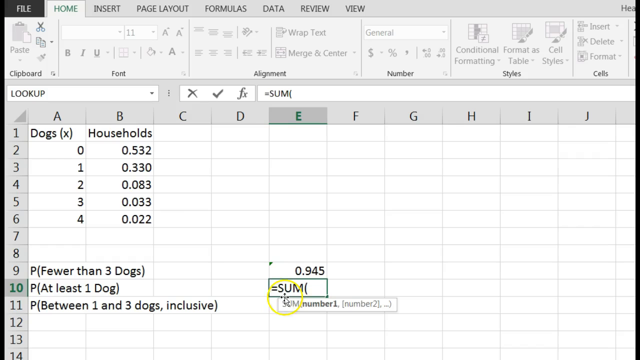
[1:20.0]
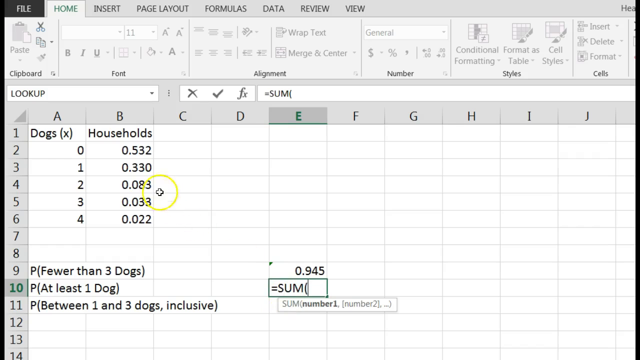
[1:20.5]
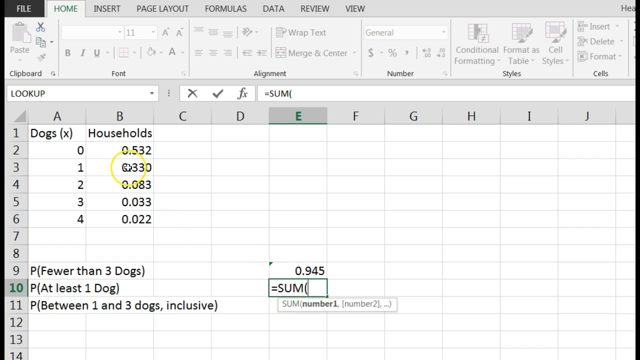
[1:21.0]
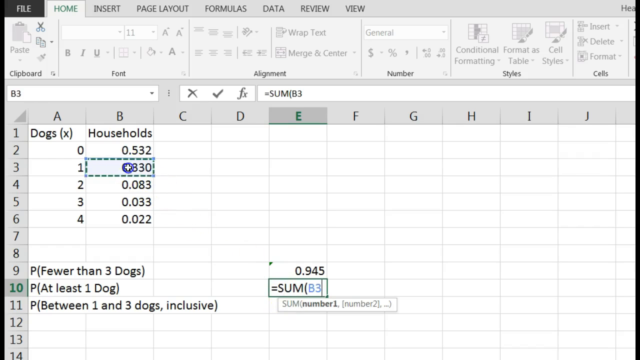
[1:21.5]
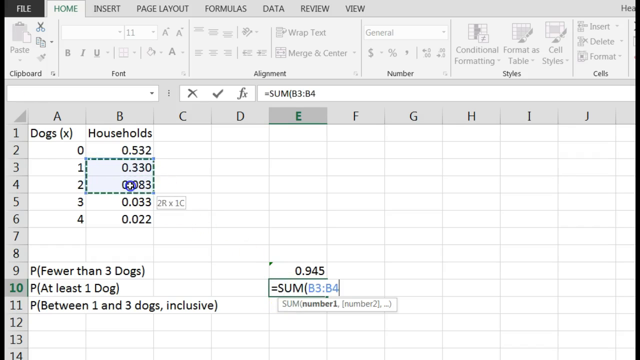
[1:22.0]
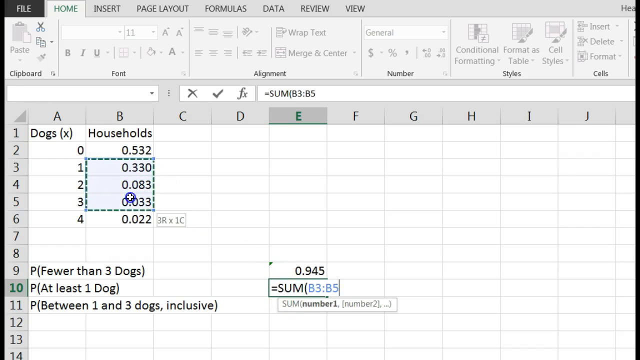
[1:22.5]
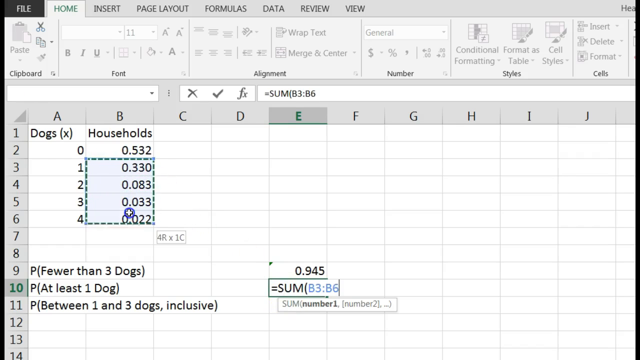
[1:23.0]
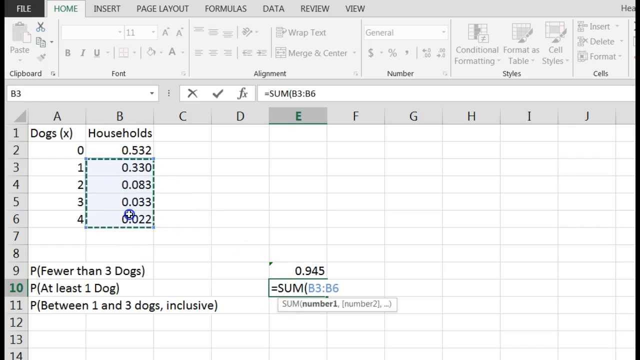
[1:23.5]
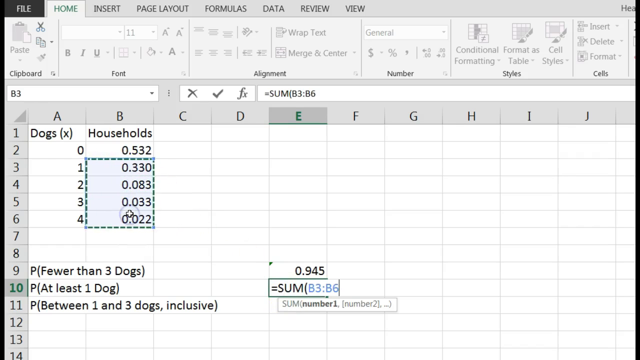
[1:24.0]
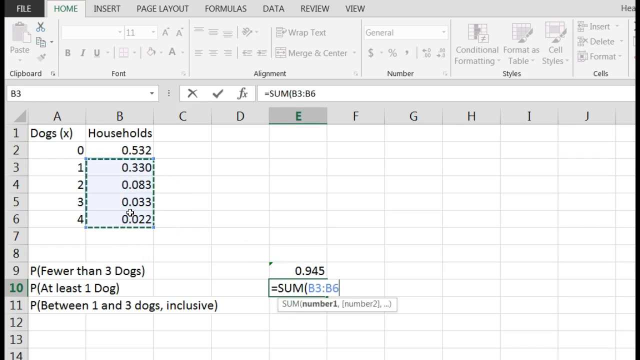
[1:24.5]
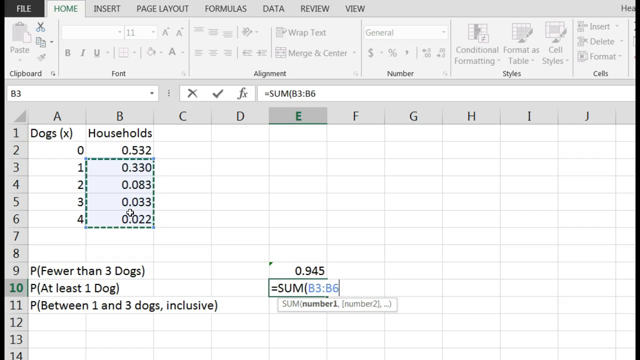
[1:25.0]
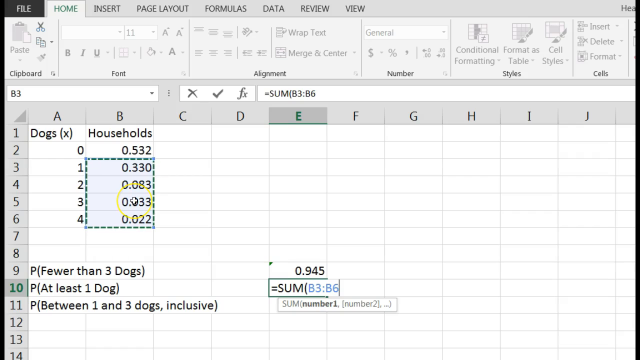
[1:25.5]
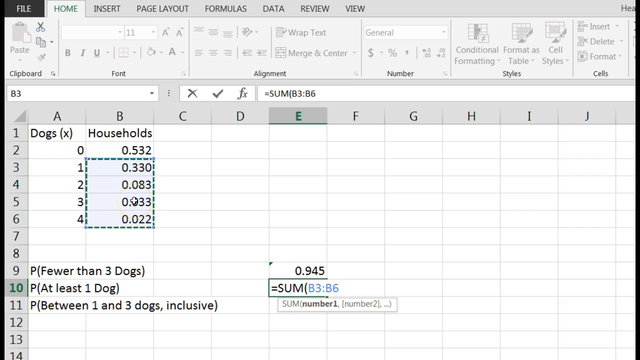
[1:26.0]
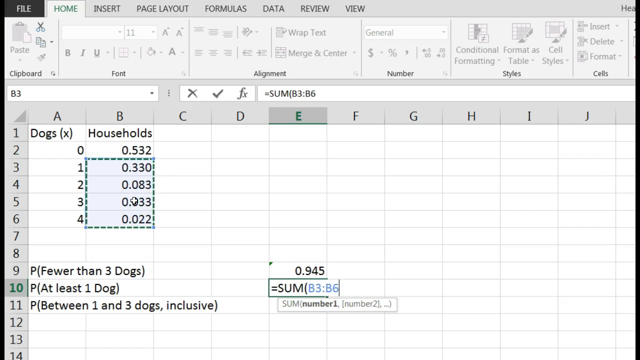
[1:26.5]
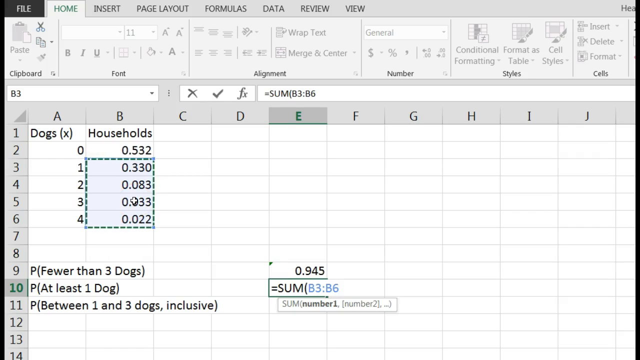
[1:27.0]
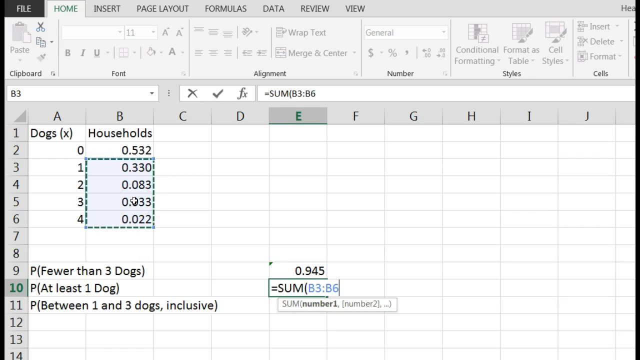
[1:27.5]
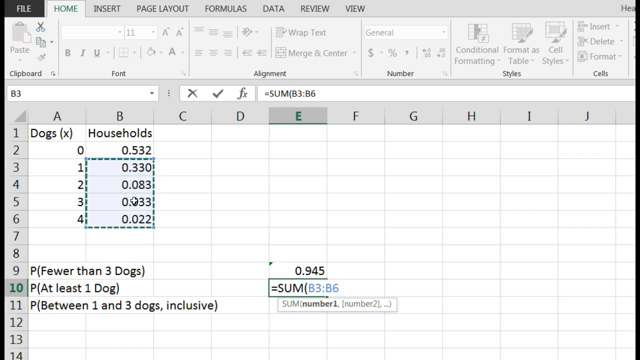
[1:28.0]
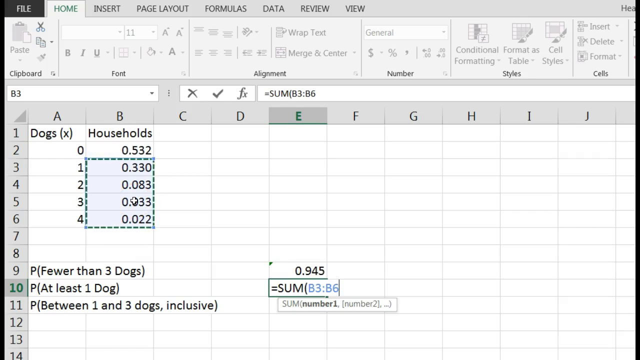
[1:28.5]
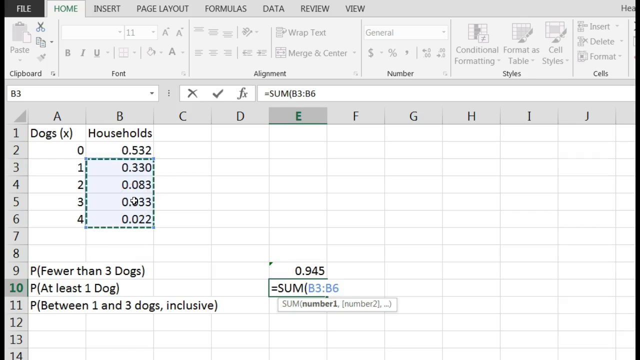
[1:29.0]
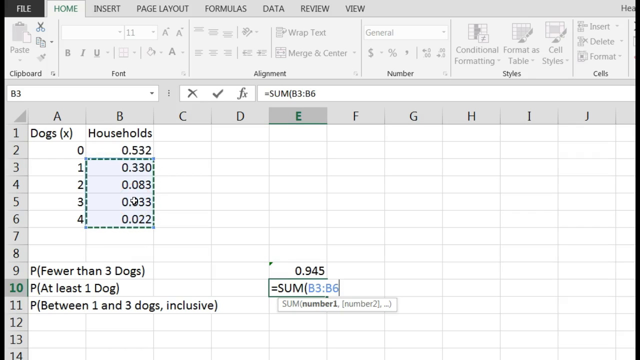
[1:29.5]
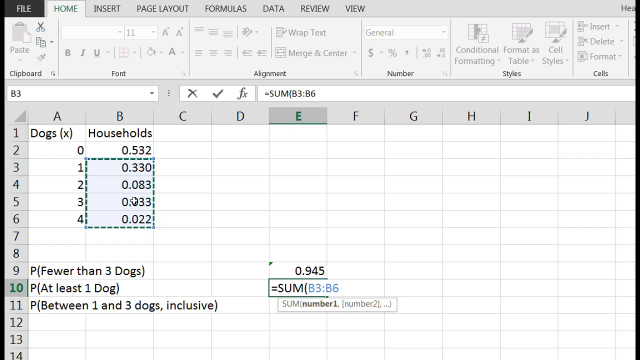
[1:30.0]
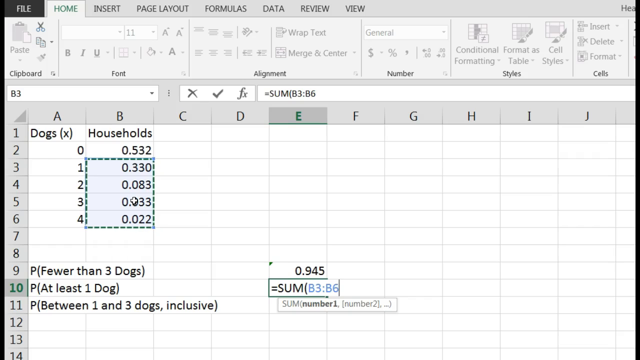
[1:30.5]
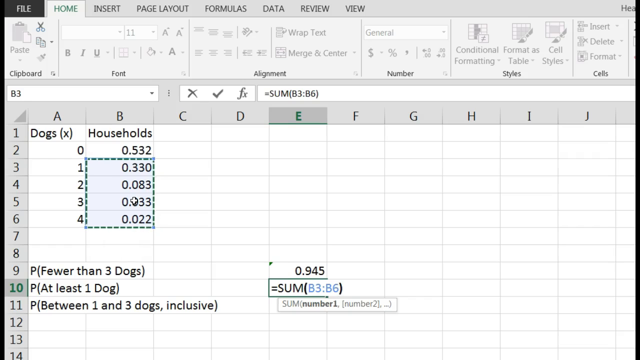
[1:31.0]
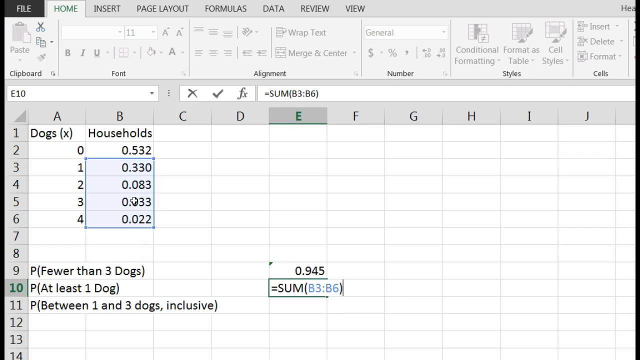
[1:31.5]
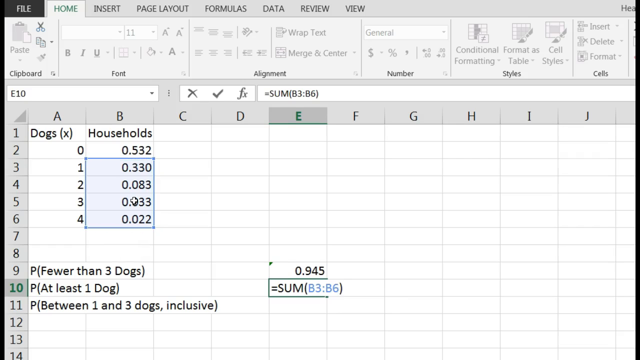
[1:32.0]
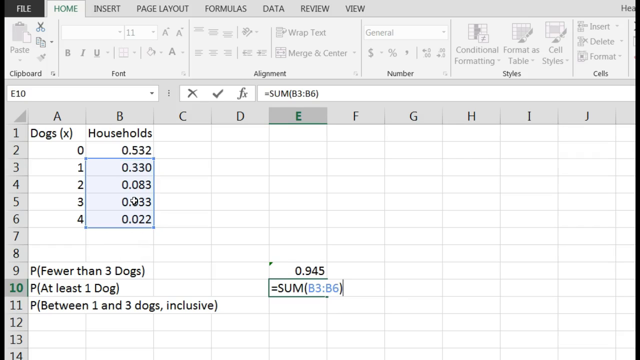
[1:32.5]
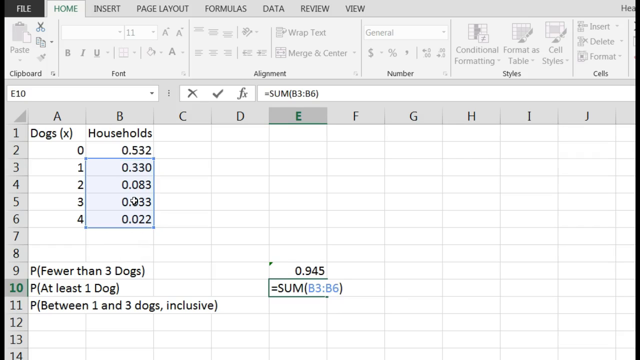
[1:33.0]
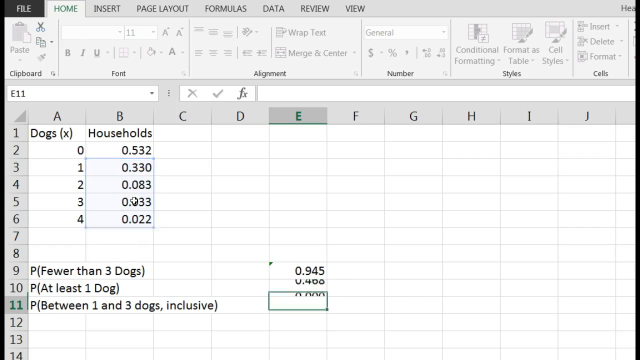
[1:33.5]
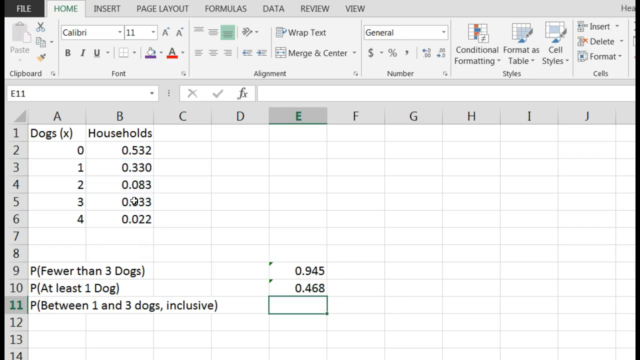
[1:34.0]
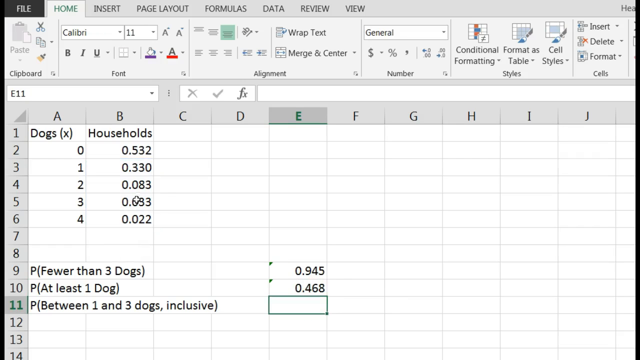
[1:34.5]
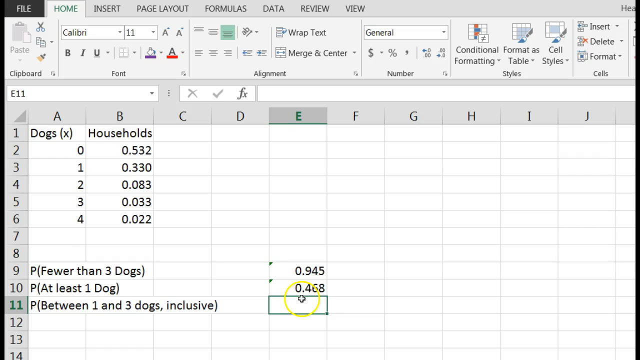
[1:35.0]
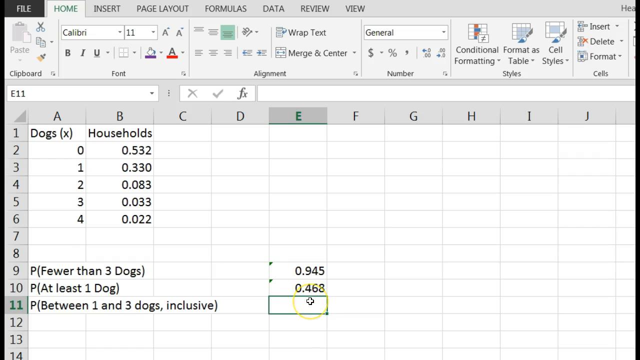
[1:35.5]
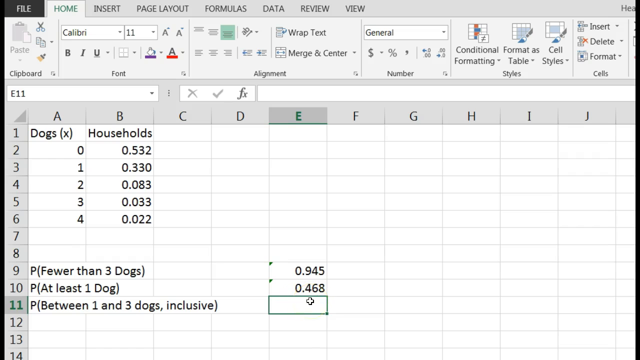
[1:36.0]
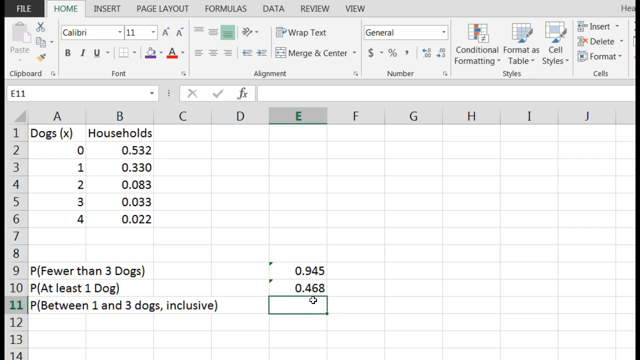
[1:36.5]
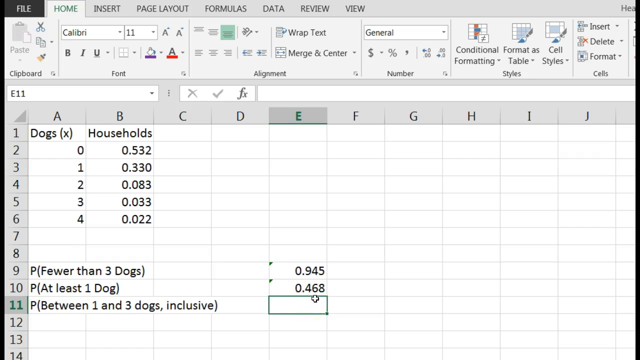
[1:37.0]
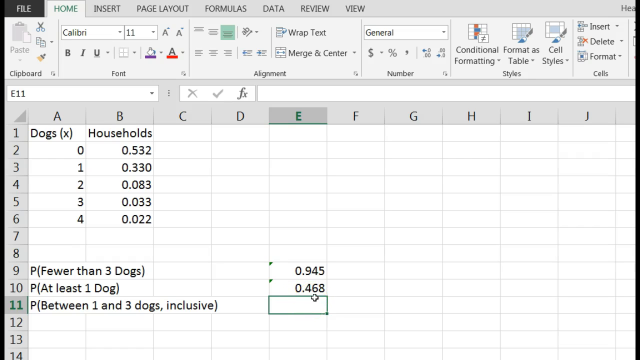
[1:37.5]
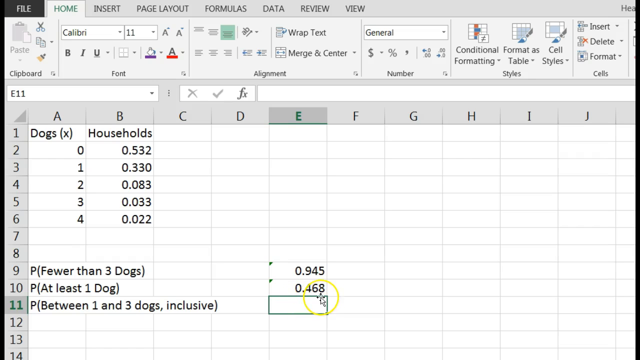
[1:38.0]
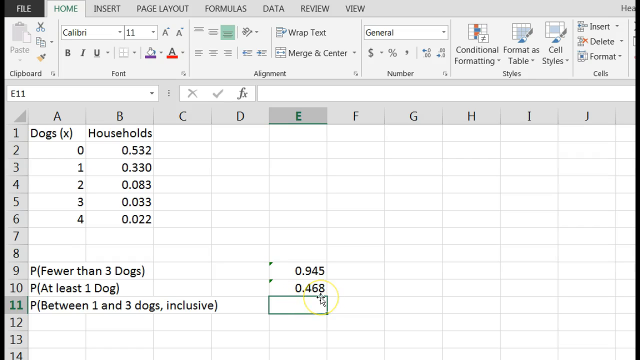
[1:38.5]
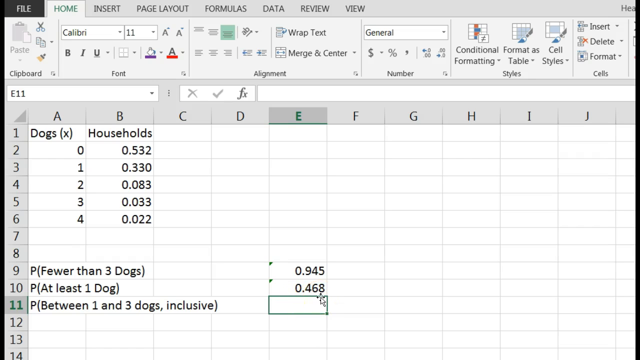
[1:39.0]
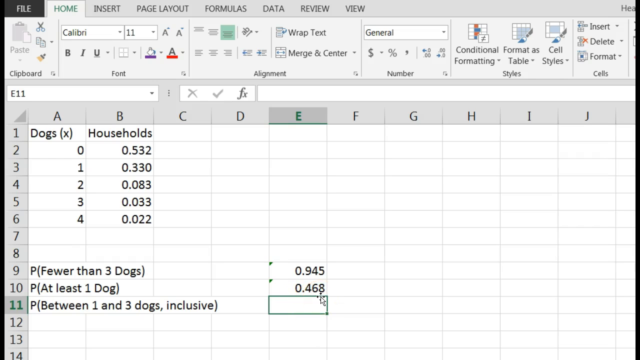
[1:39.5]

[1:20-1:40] Equals sum is typed out, and below it the box appears again with a caption showing sum, parentheses, number one and number two. The cursor moves up to B3 and holds down, and small dotted lines run around the cell's border. It clicks and drags cell by cell to select B3 through B6, which contain decimal numbers, apparently clicking briefly on B5, with a yellow circle around the plus cursor for a second. The bar at the bottom reads "=sum(B3:B6)" in blue. Enter is pressed and the result is 0.468, with the green triangle at the top left of the cell. The cursor then clicks on the next cell down, E11, which gets a green border. It clicks for a second on the top right part of E11's border, with the yellow circle around it again. When it clicks, there is a crosshair and a cursor, the cursor appearing to be almost in the middle of the crosshair.